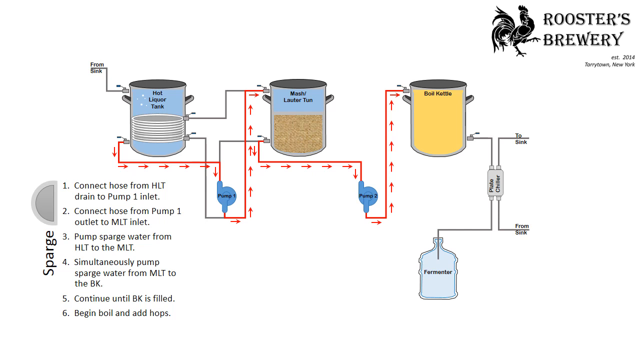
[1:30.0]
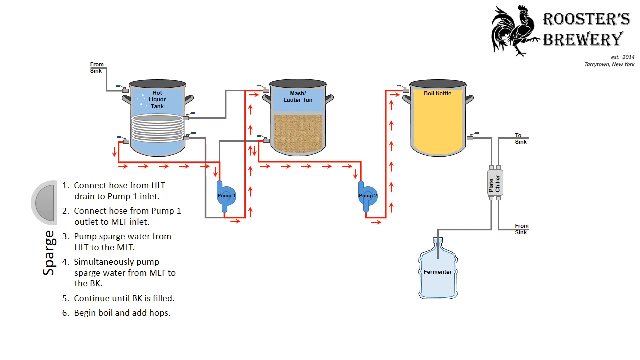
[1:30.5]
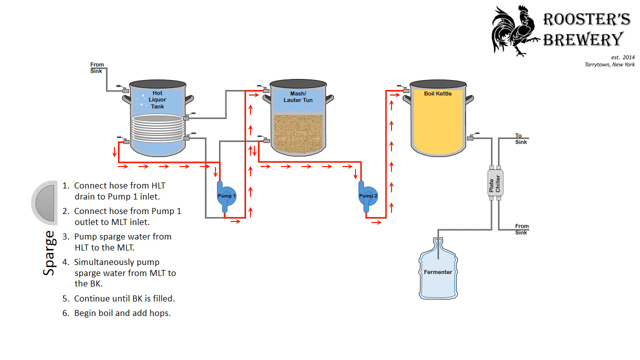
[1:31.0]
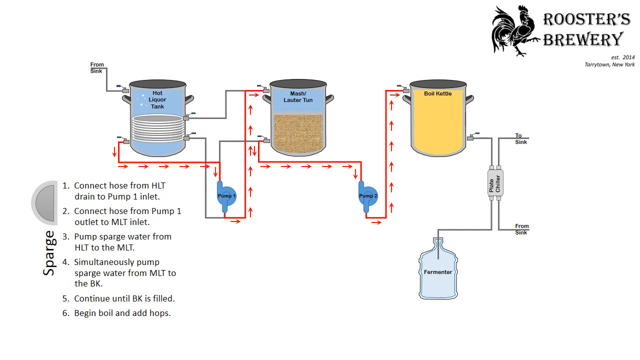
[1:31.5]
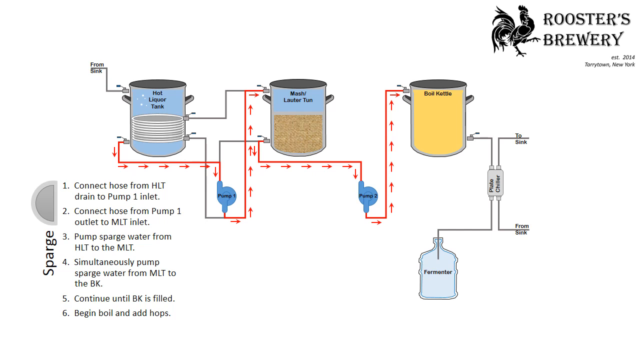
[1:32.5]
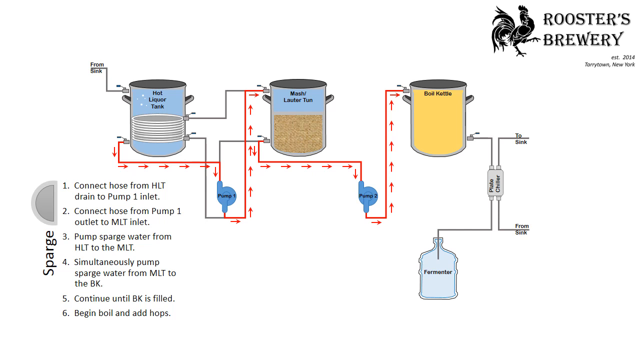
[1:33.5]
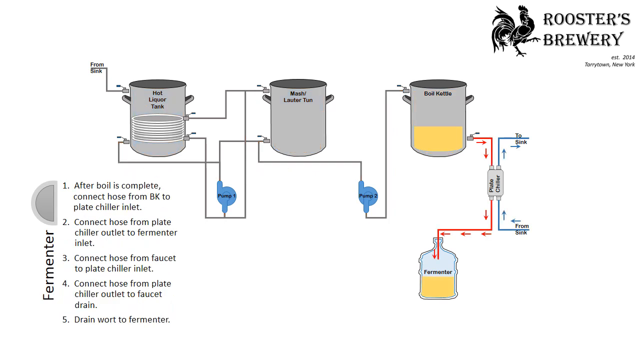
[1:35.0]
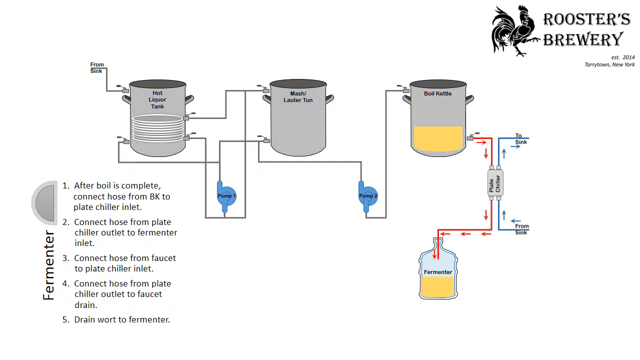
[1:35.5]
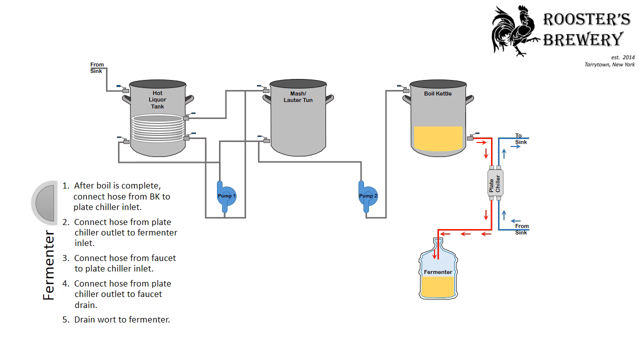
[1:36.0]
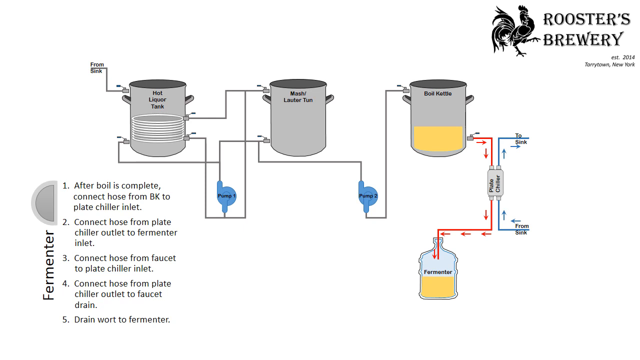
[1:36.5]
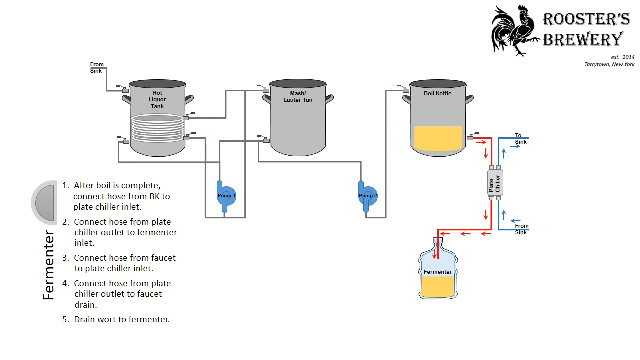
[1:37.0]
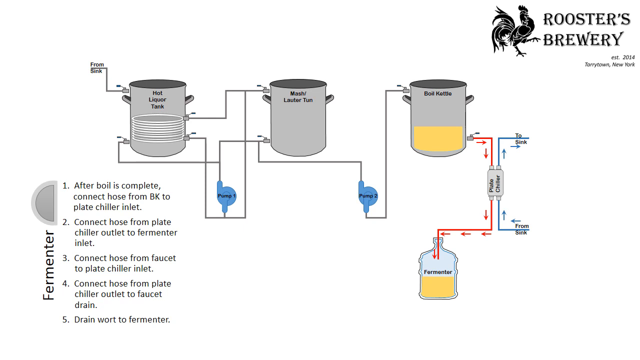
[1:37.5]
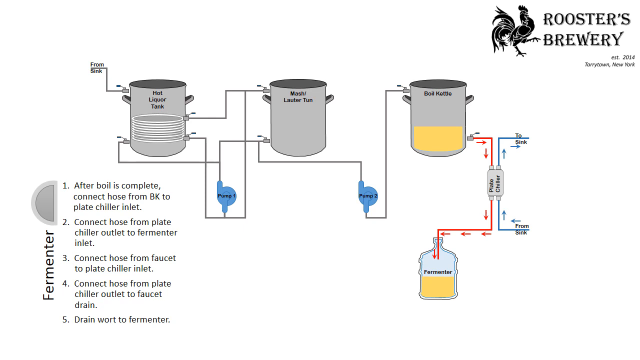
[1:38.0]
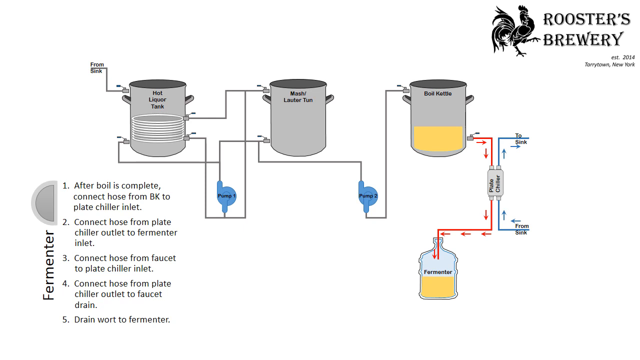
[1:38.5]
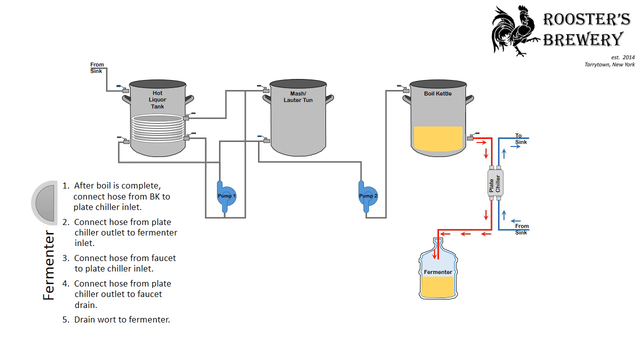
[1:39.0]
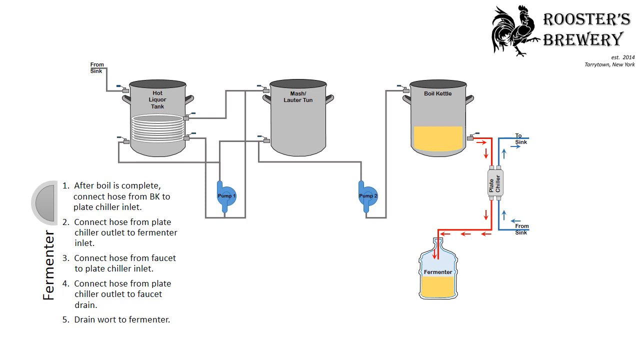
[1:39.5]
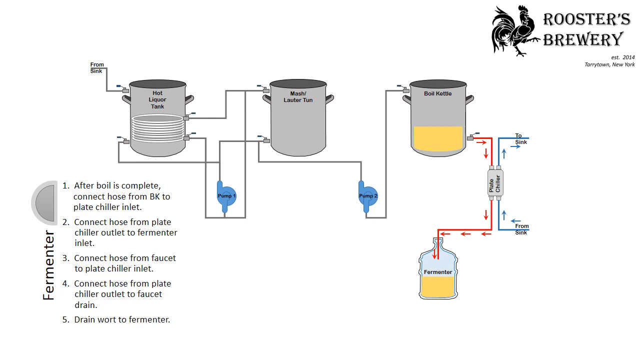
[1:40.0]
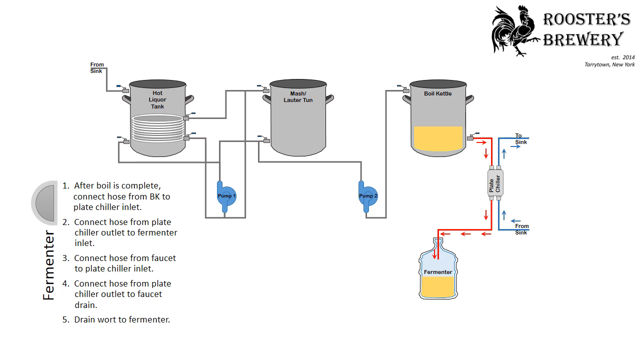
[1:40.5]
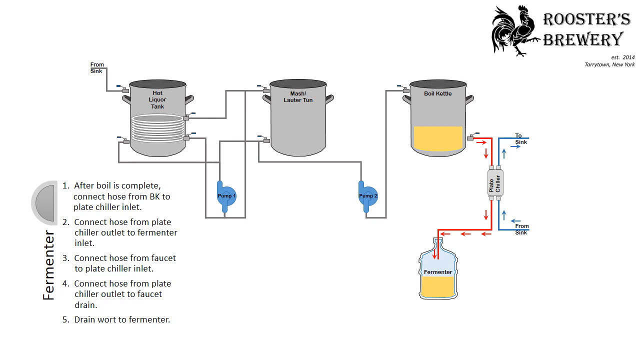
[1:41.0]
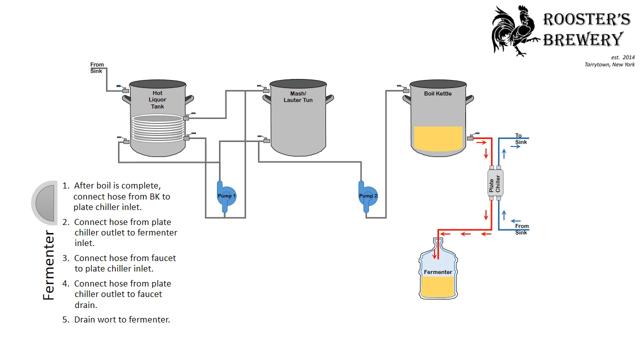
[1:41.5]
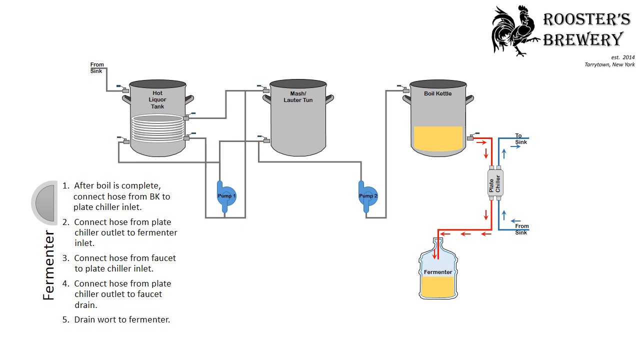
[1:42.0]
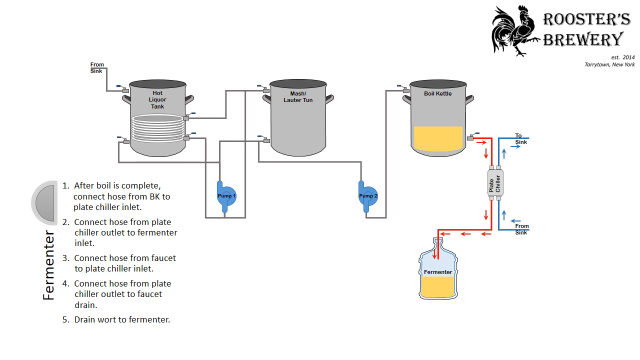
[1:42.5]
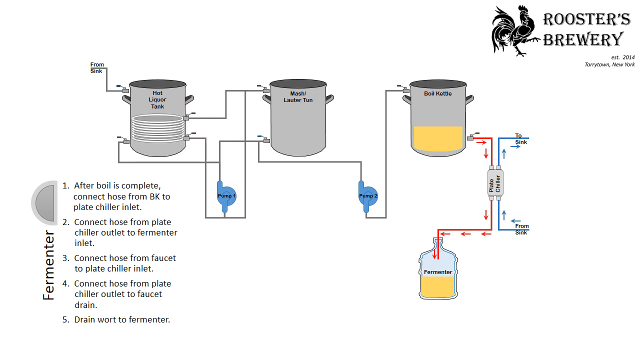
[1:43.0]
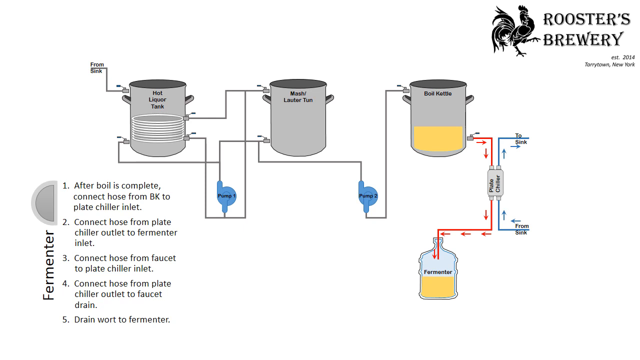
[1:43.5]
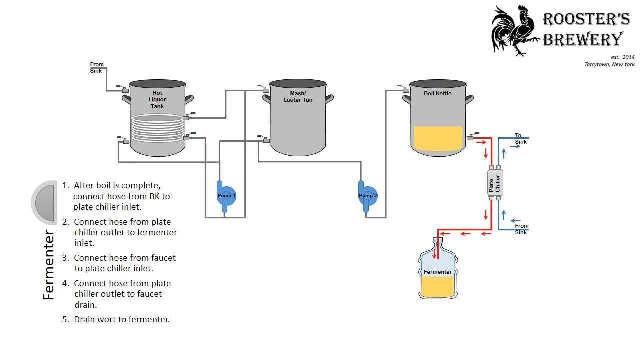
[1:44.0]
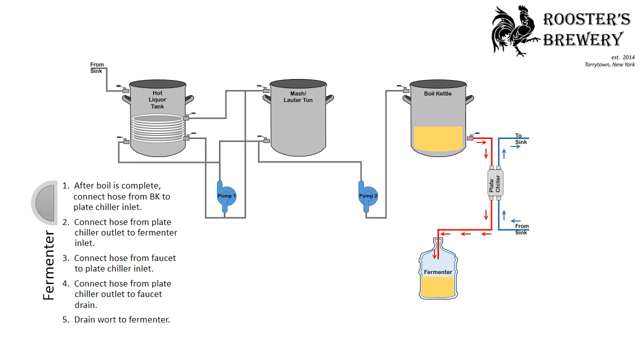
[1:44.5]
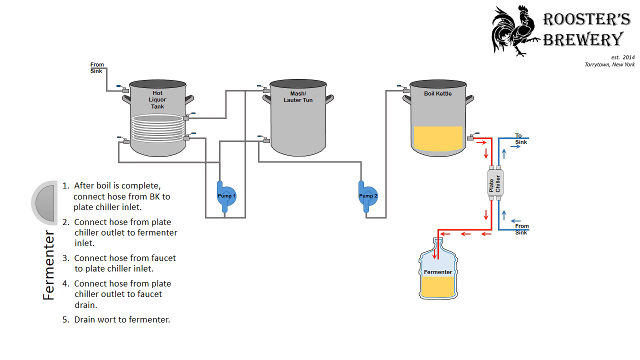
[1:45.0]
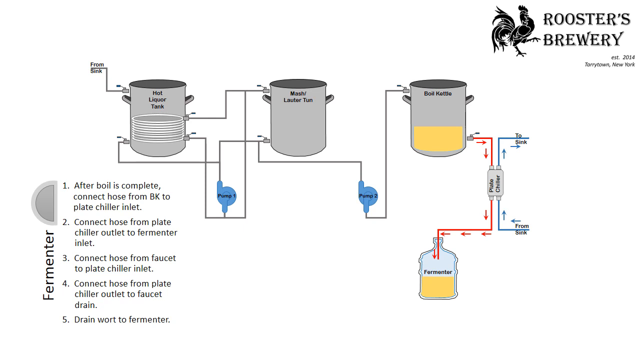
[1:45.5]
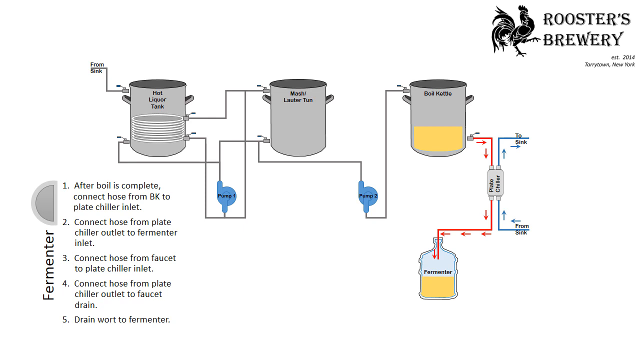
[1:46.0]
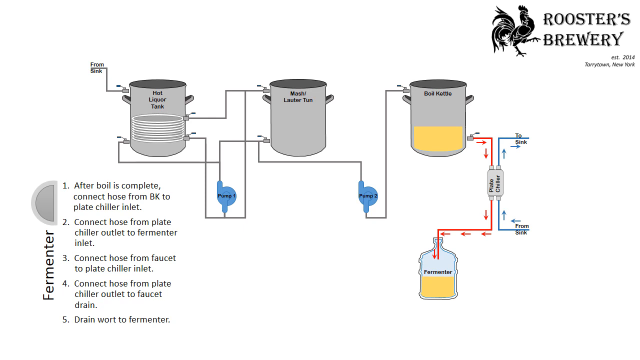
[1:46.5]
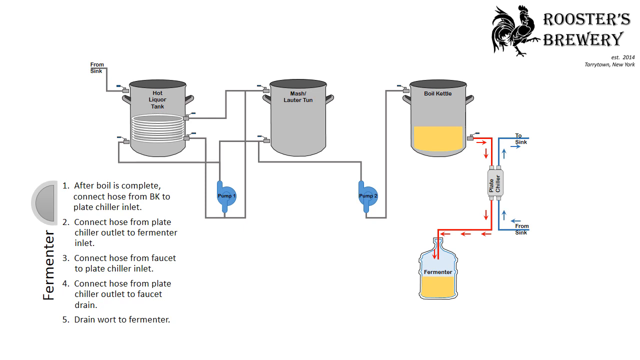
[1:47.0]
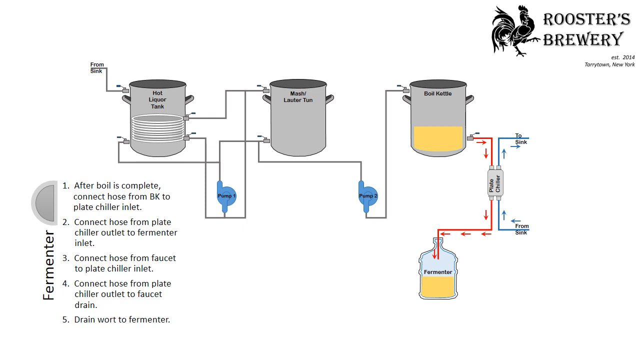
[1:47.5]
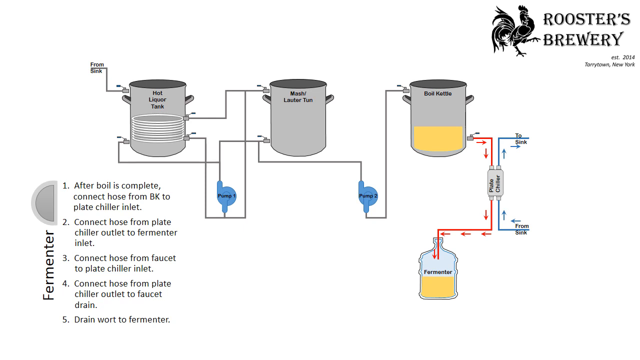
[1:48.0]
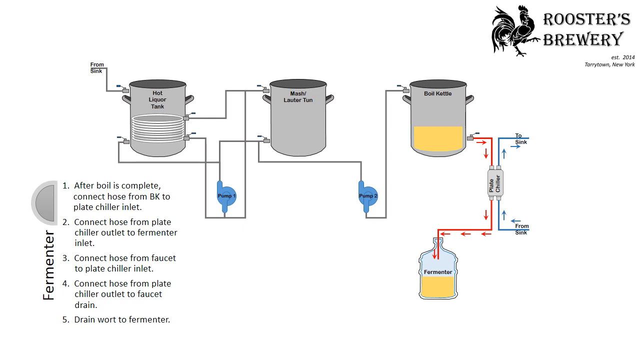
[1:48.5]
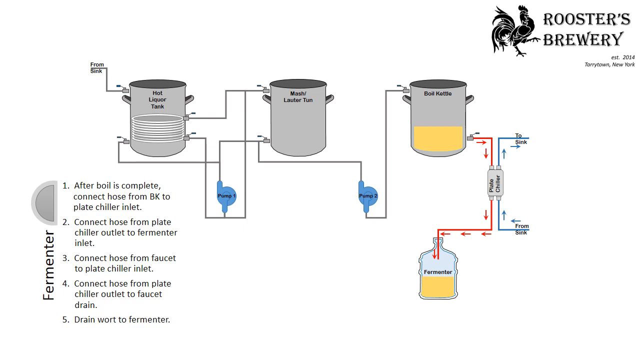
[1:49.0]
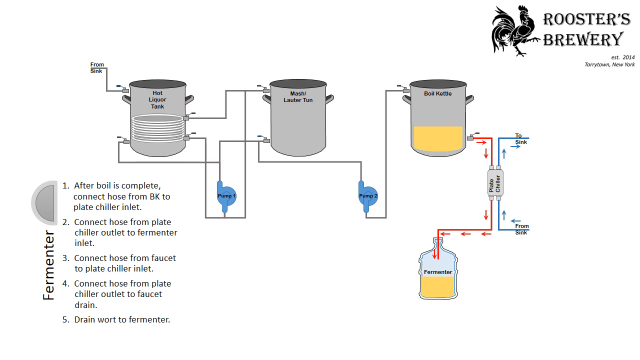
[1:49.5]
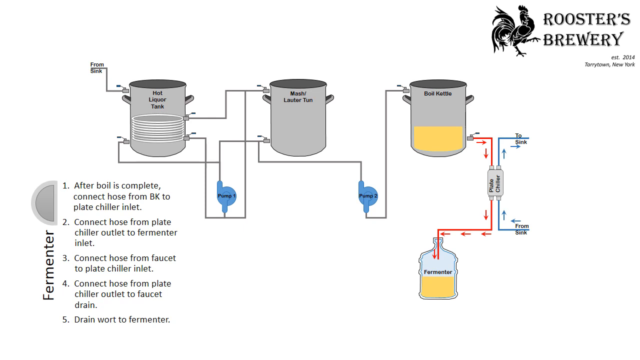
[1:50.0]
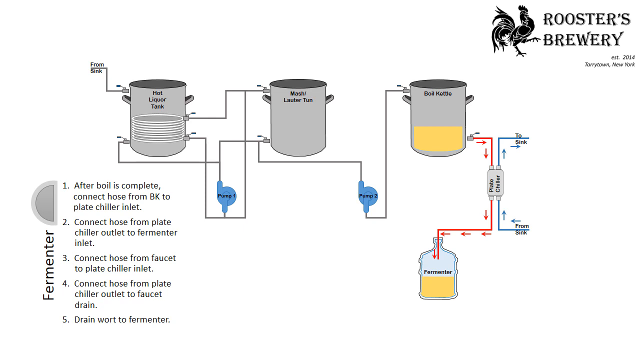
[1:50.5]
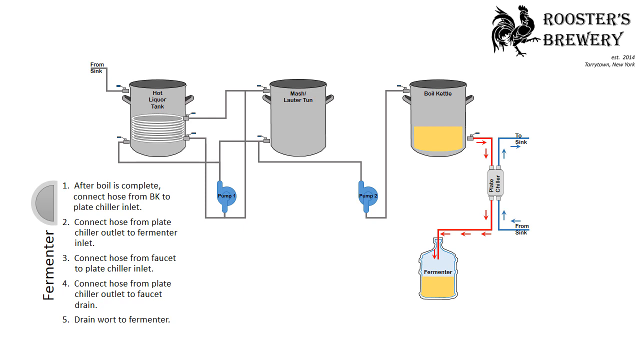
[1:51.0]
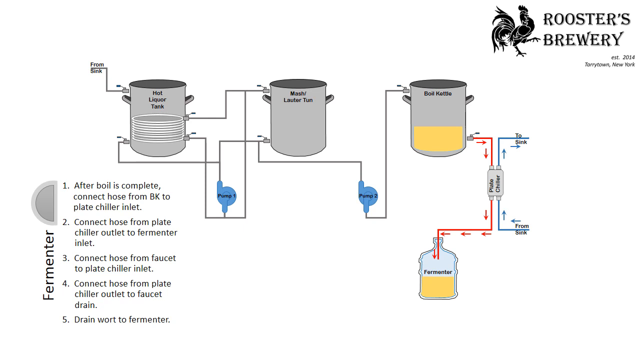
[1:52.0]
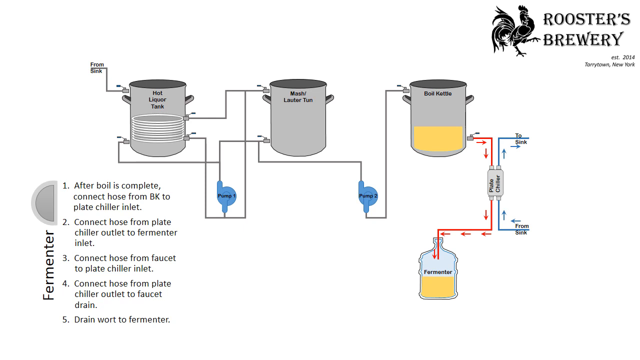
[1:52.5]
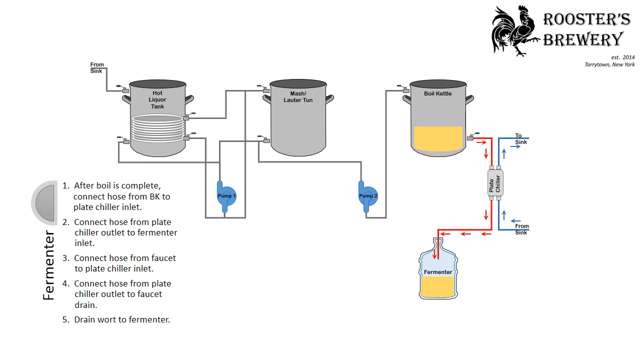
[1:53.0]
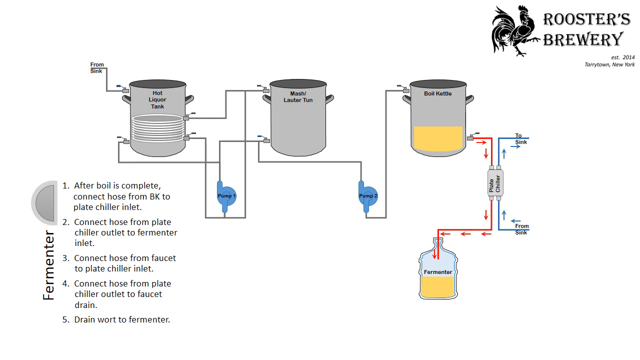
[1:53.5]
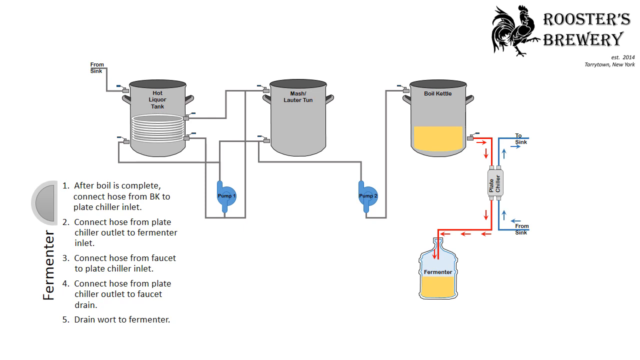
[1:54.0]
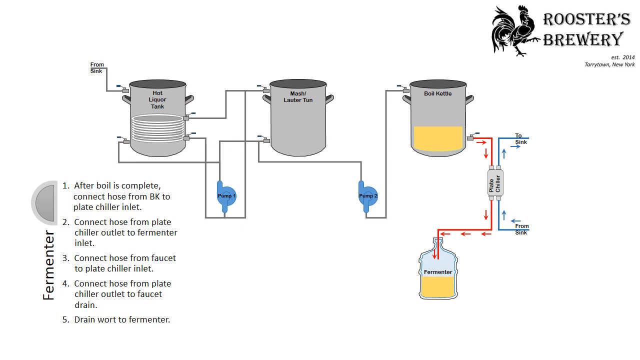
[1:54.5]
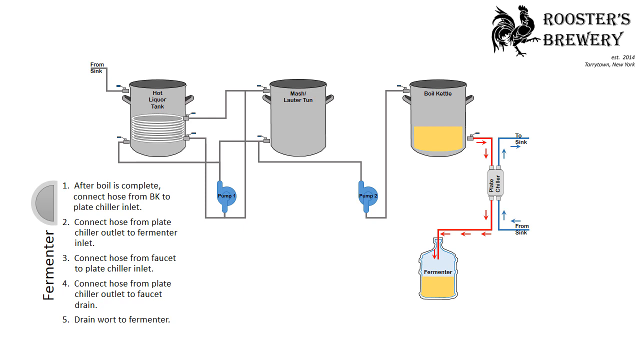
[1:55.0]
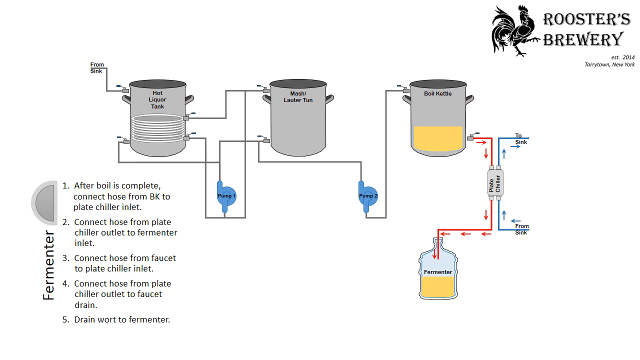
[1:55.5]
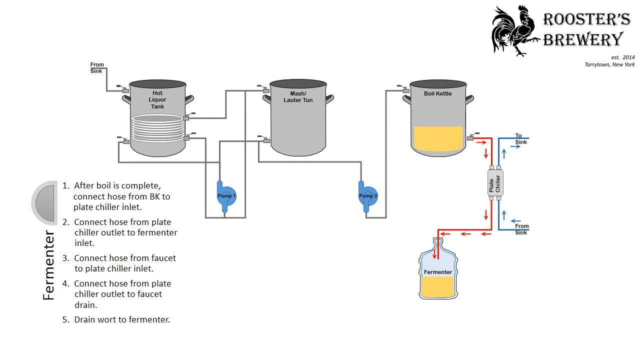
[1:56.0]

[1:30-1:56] The process continues to the fermenter step. The right part of the system is in motion, and the boil kettle is below half full. Blue and red colored paths indicate what flows where. Steps on the left side of the screen read: 1. "After boil is complete, connect the hose from the boil kettle to the plate chiller inlet"; 2. "Connect the hose from the plate chiller outlet to the fermenter inlet"; 3. "Connect the hose from the faucet to the plate chiller inlet"; 4. "Connect the hose from the plate chiller outlet to the faucet drain"; and a fifth step about draining to the fermenter. The plate chiller is the machine between the fermenter and the boil kettle. The steps are visualized by drawing onto the paths the product takes to reach the fermenter.